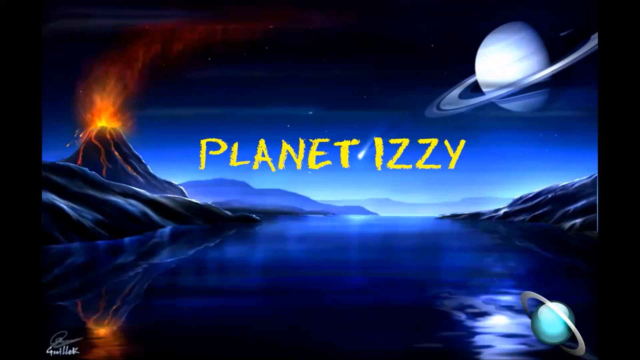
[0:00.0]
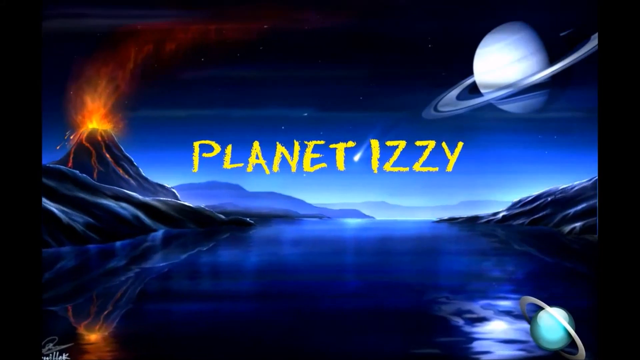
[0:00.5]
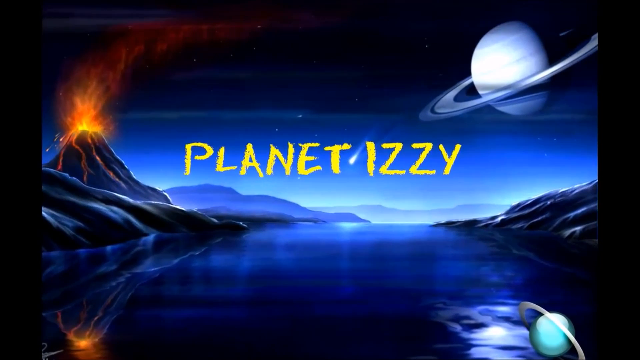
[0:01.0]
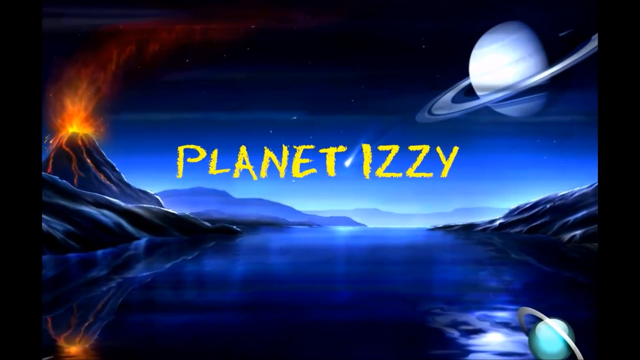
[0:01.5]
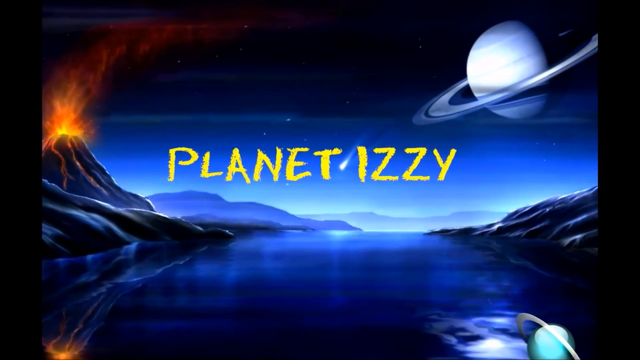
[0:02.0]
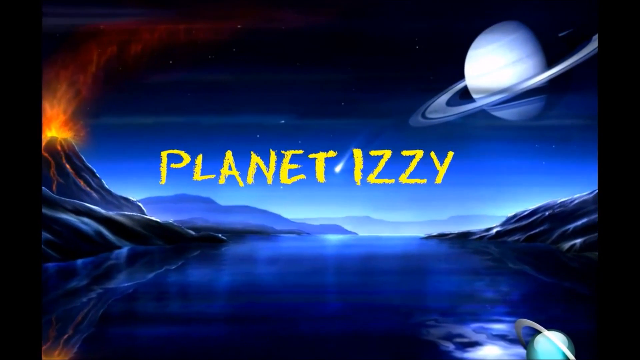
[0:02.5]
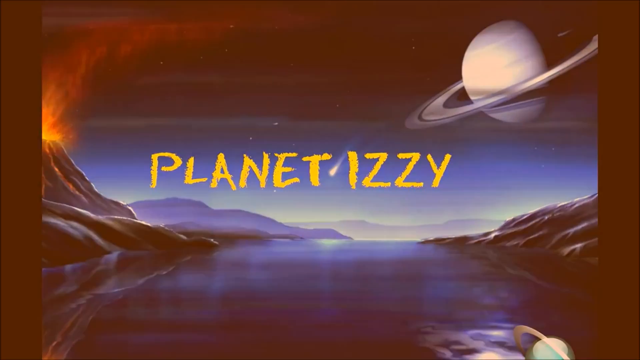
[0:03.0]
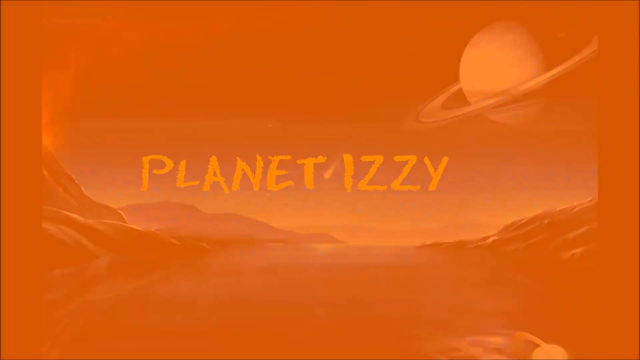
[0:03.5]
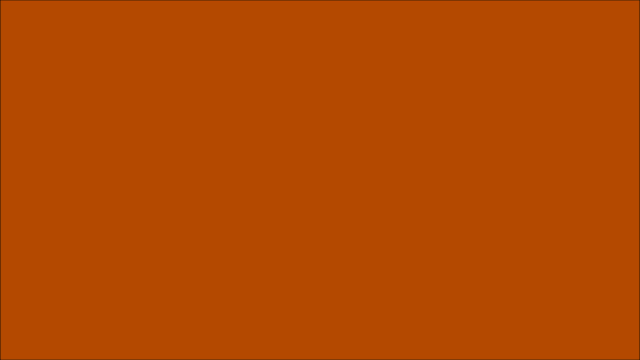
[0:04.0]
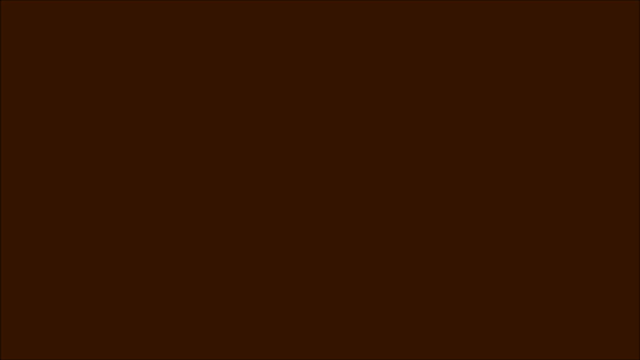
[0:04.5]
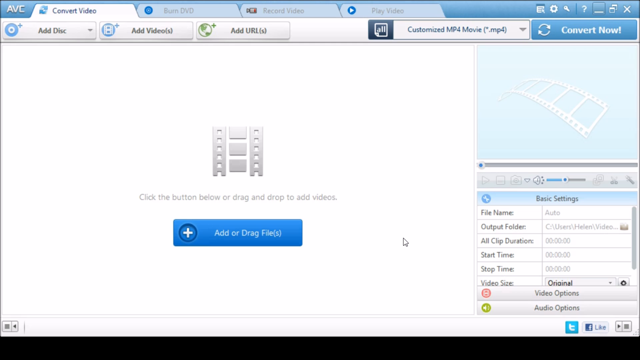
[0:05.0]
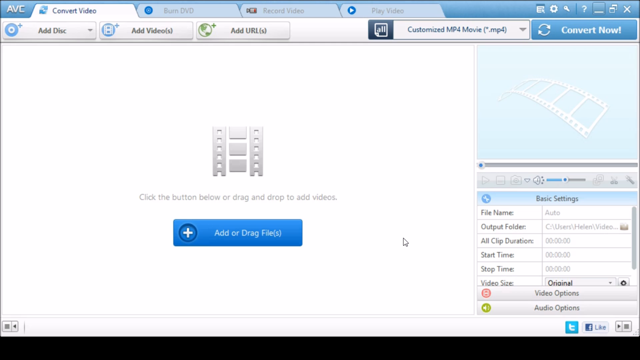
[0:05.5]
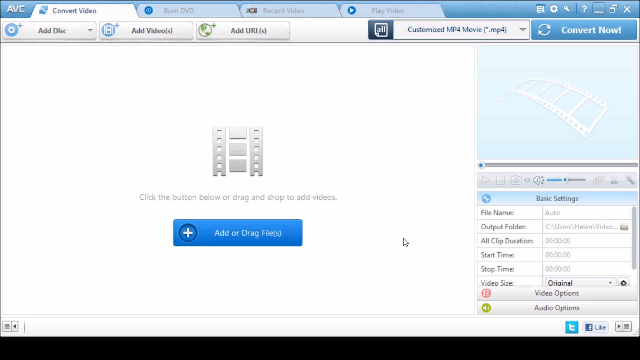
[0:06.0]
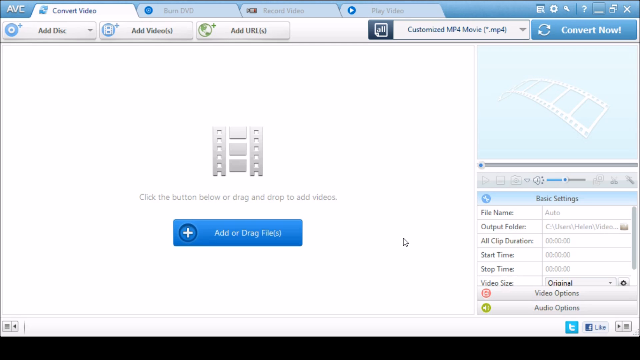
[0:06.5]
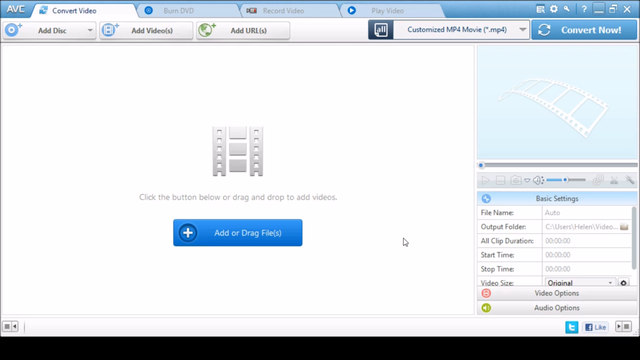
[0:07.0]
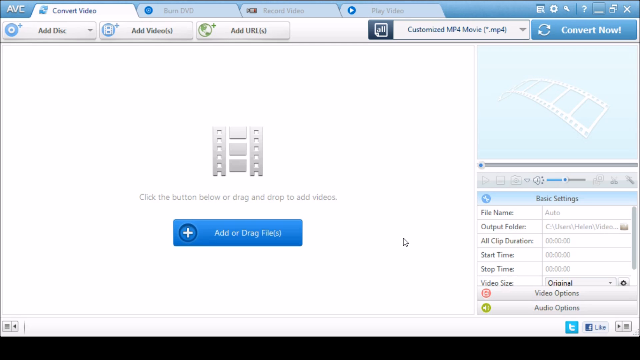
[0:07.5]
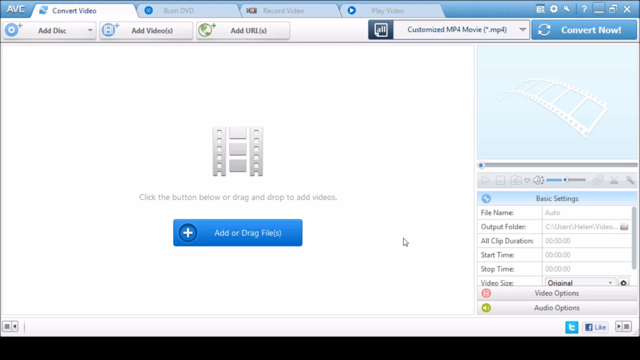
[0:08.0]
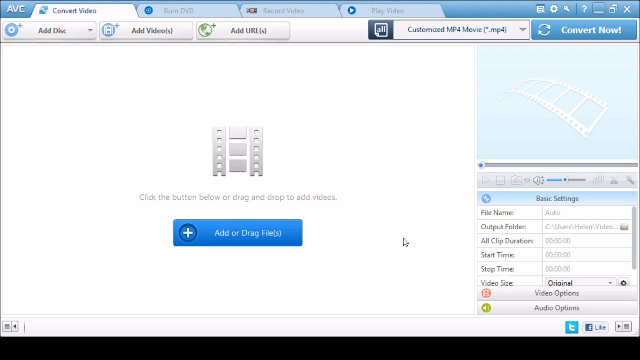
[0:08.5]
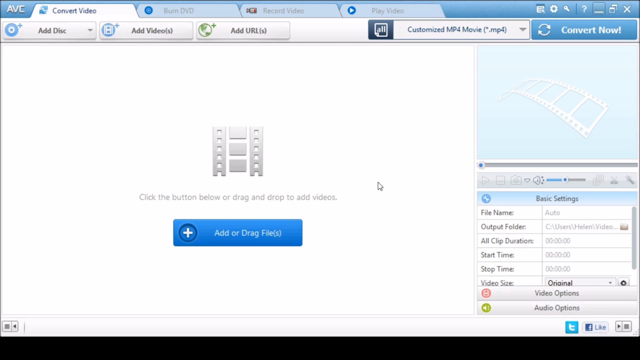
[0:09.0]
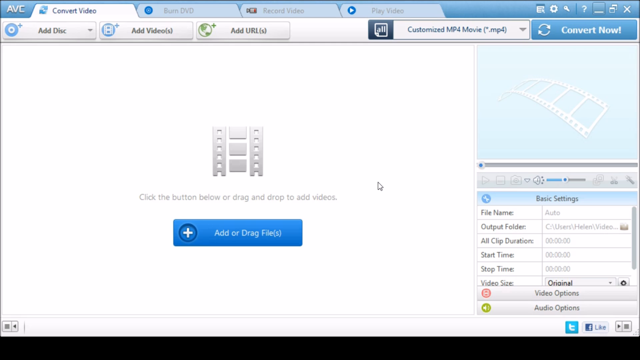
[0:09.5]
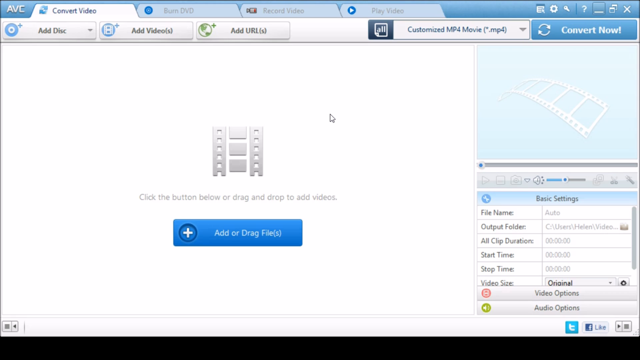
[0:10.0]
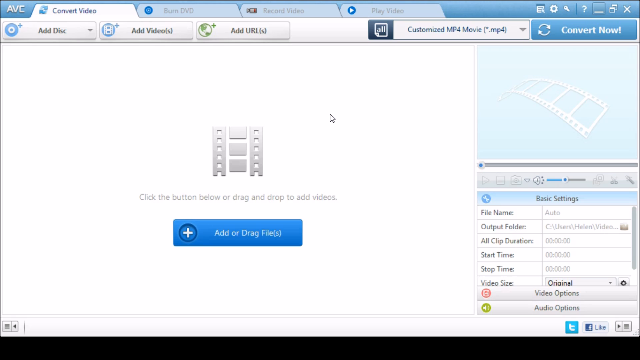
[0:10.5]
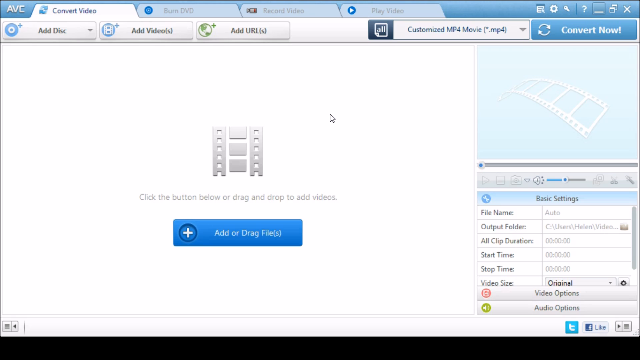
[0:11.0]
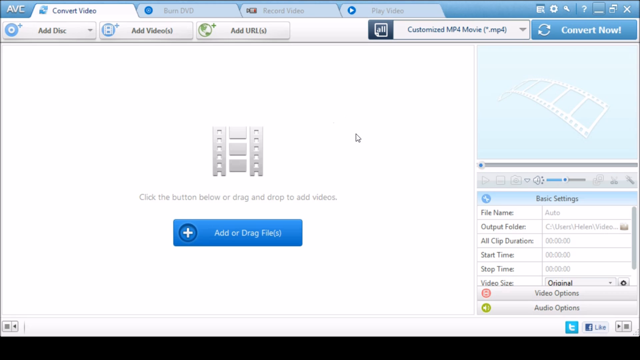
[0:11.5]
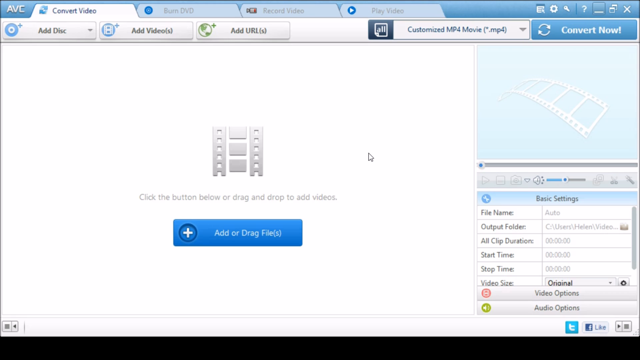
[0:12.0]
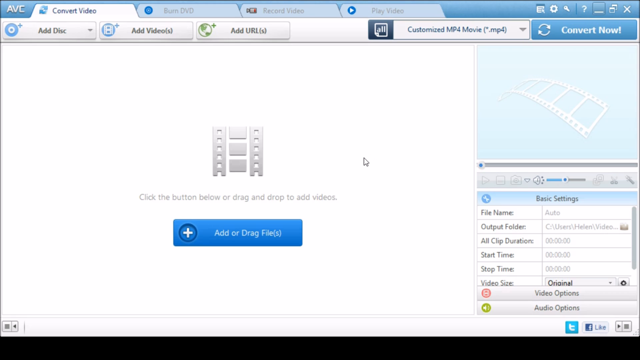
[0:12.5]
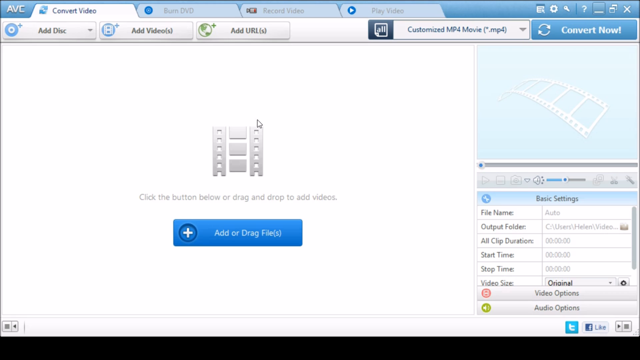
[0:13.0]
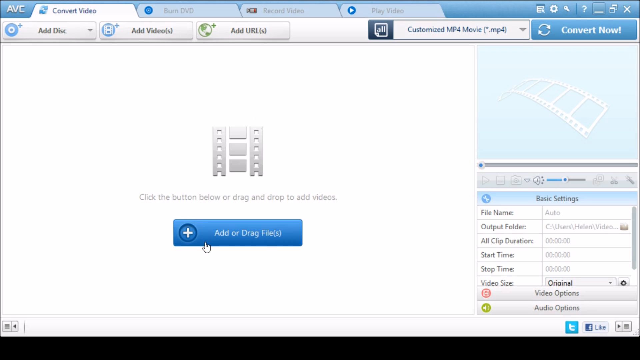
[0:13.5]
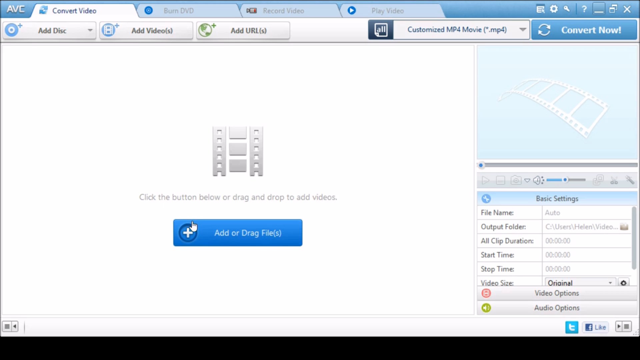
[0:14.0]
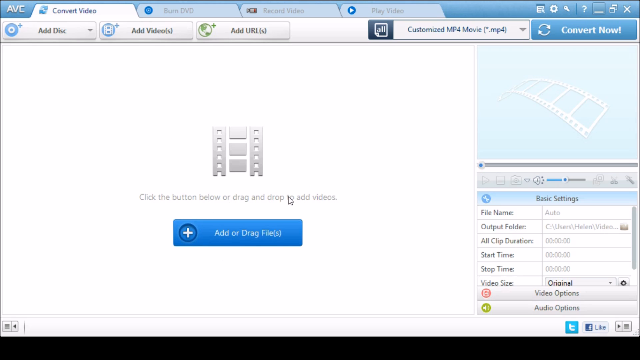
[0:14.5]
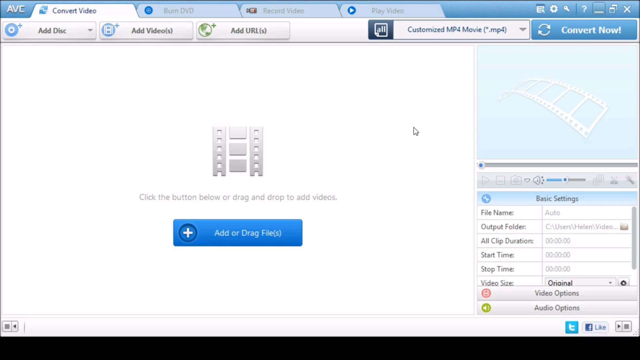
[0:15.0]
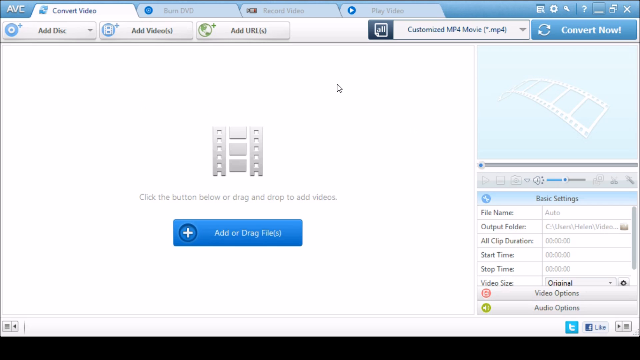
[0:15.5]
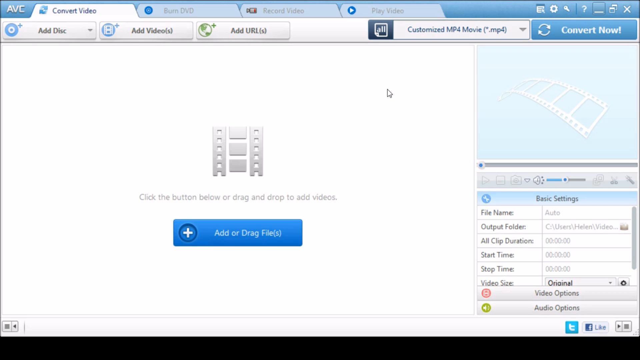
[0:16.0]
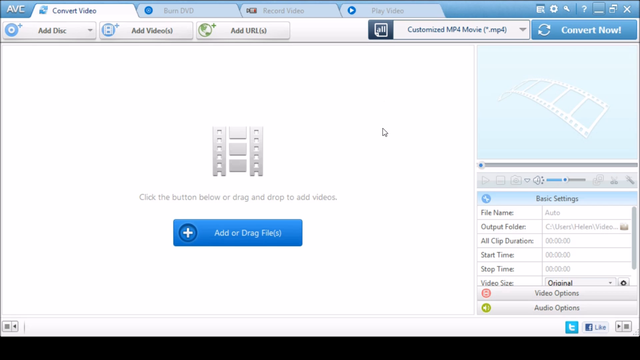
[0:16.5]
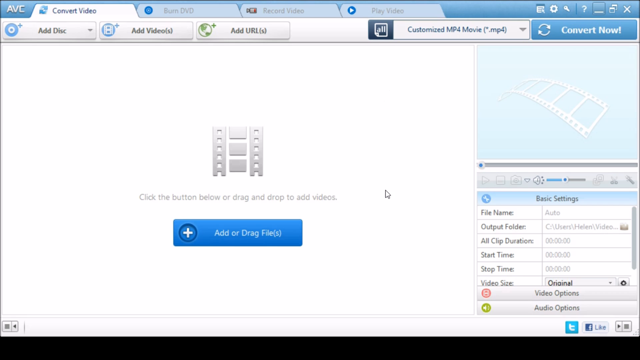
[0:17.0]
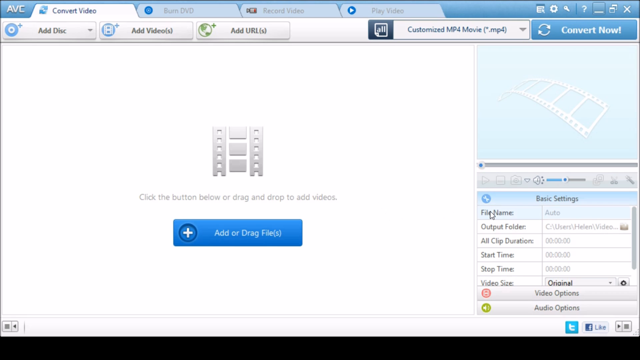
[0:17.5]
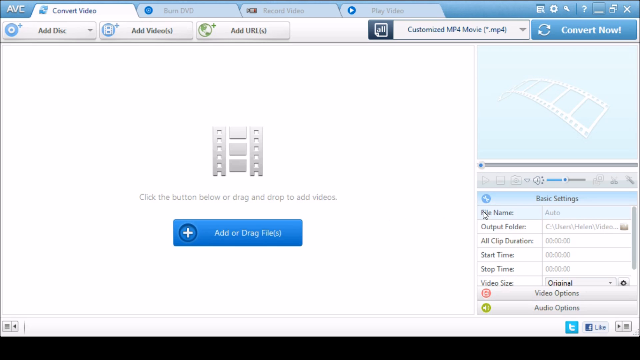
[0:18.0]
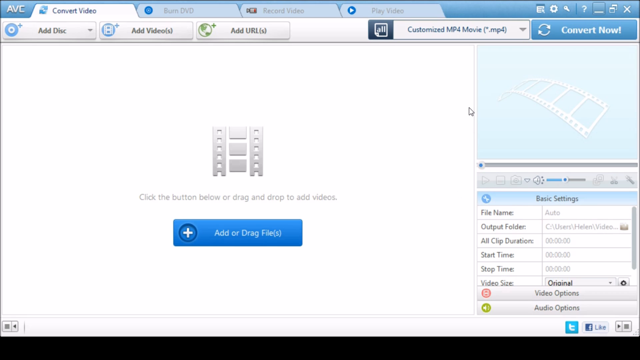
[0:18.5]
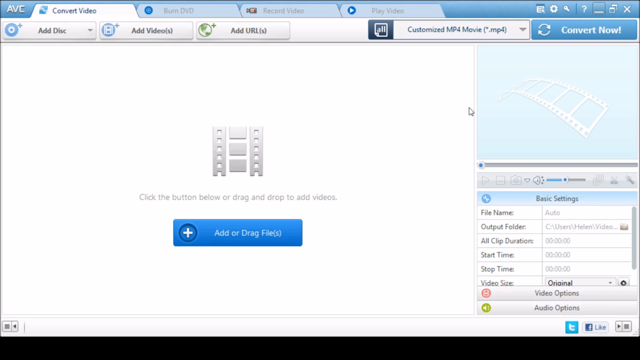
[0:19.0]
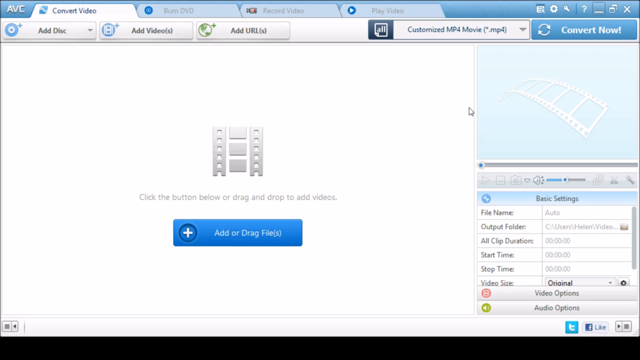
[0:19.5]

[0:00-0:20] A person is trying to play a video, but the video seems to be blacked out, with no data showing. A planet appears, along with a fire hill and what seems to be a river, with a lot of things together.